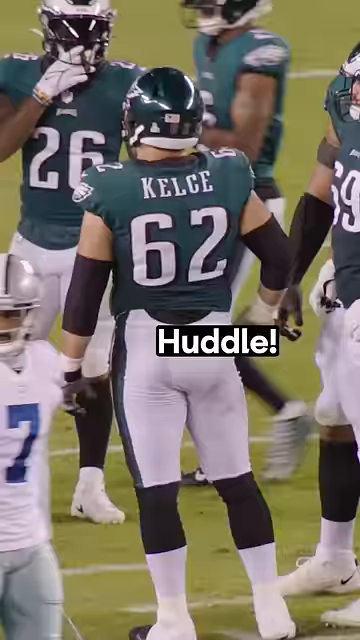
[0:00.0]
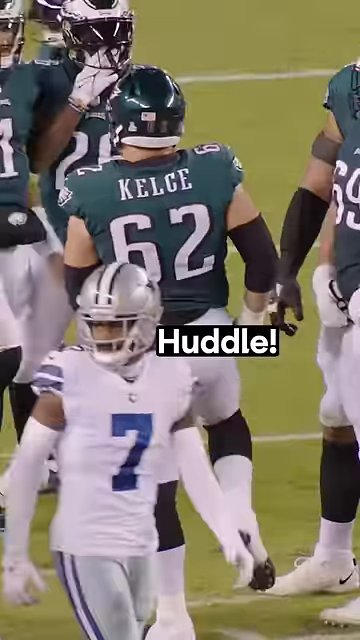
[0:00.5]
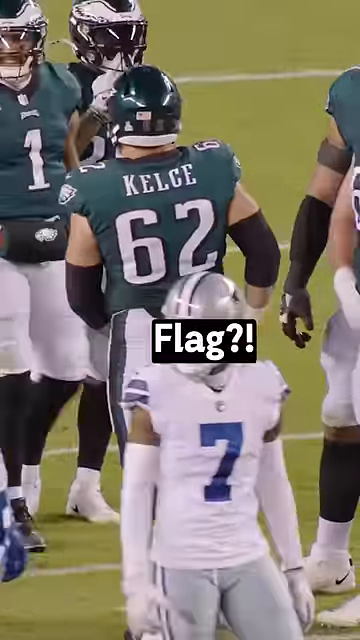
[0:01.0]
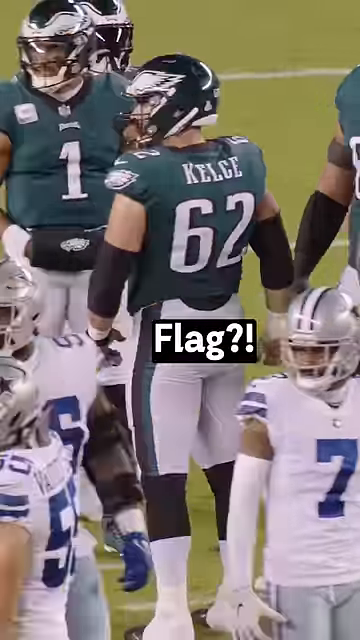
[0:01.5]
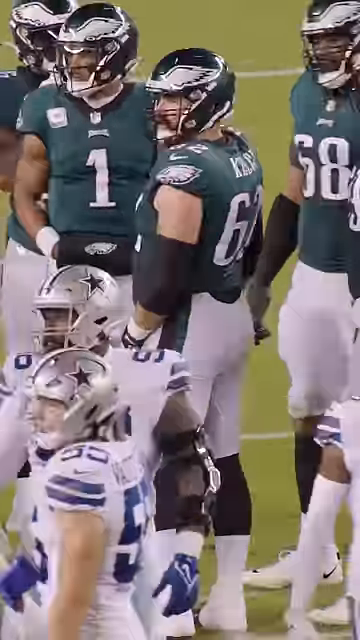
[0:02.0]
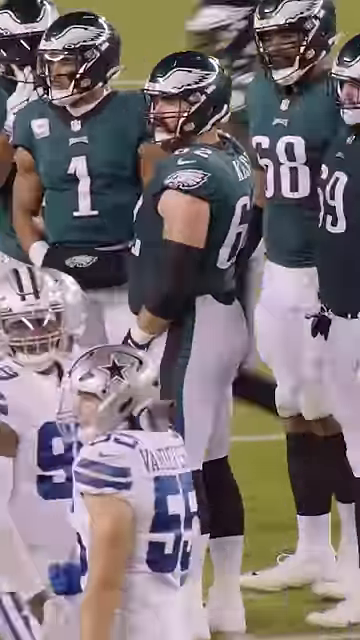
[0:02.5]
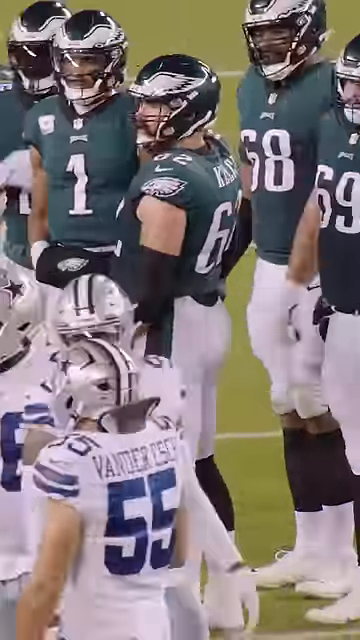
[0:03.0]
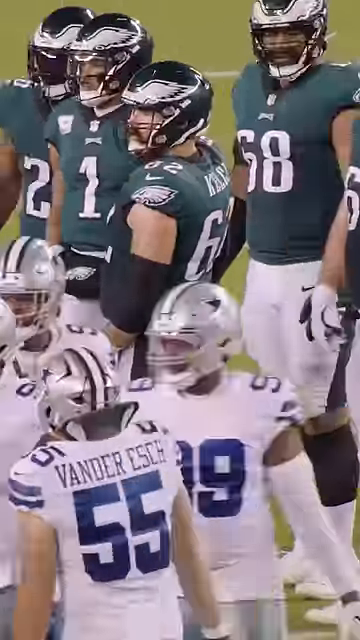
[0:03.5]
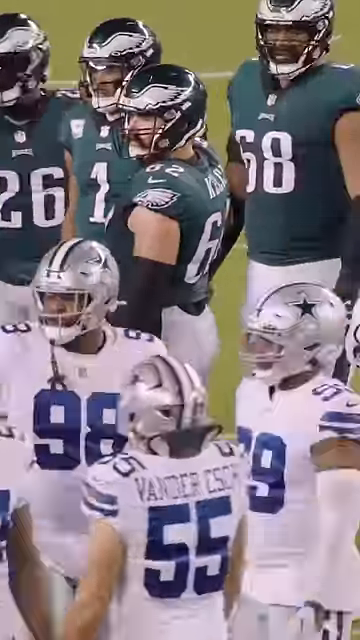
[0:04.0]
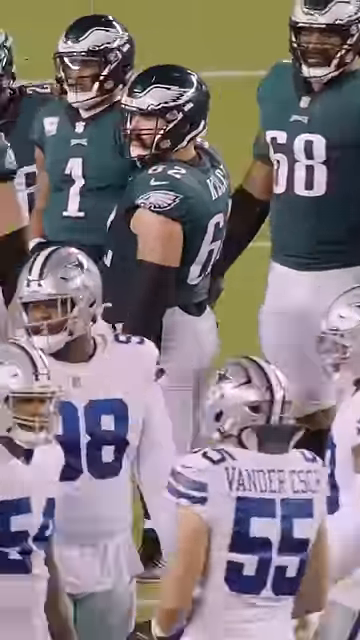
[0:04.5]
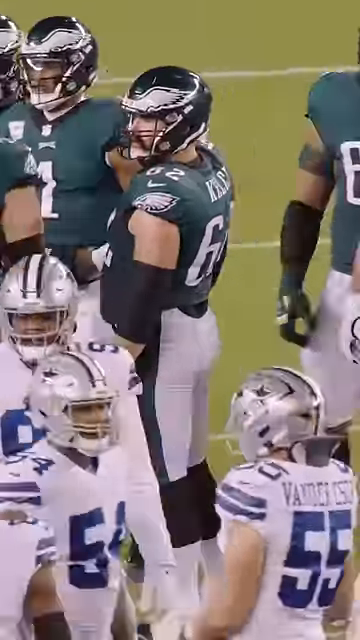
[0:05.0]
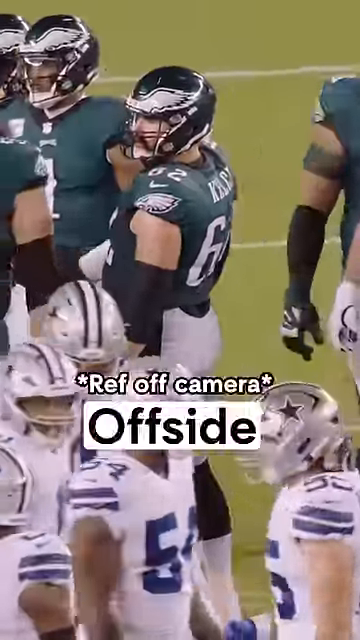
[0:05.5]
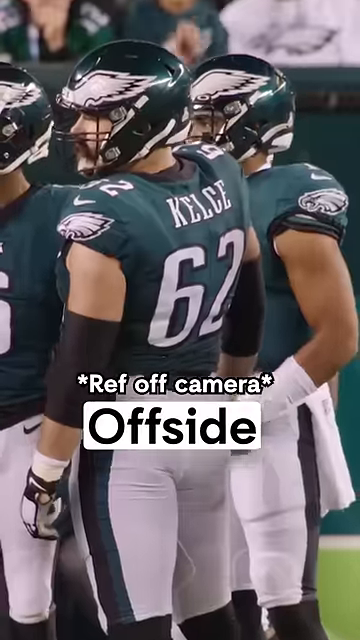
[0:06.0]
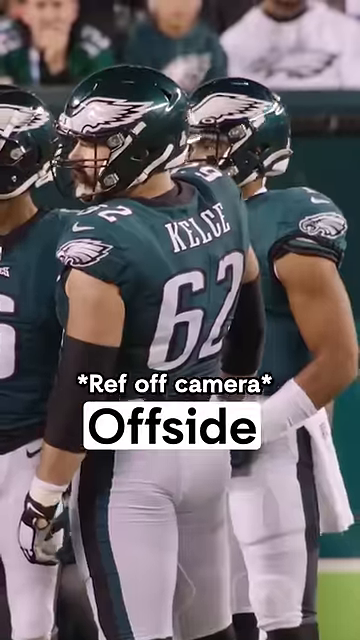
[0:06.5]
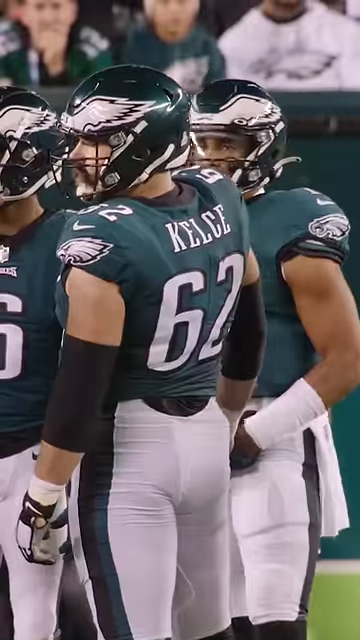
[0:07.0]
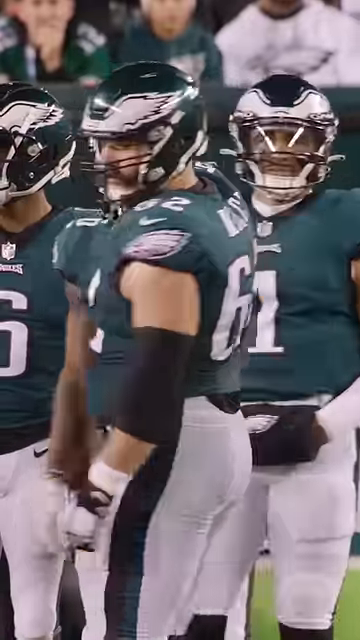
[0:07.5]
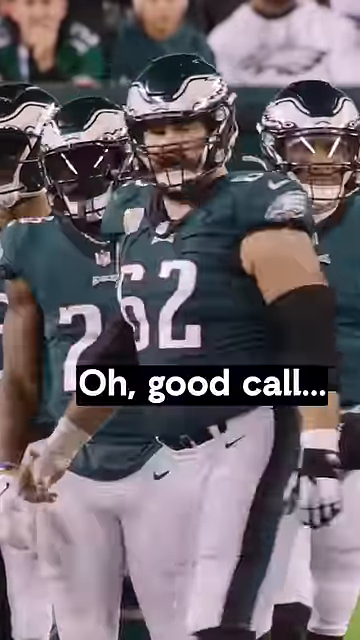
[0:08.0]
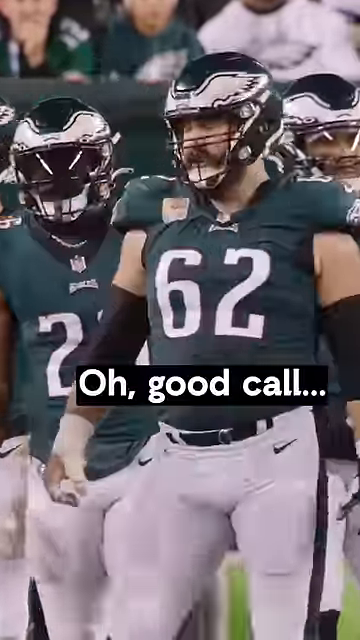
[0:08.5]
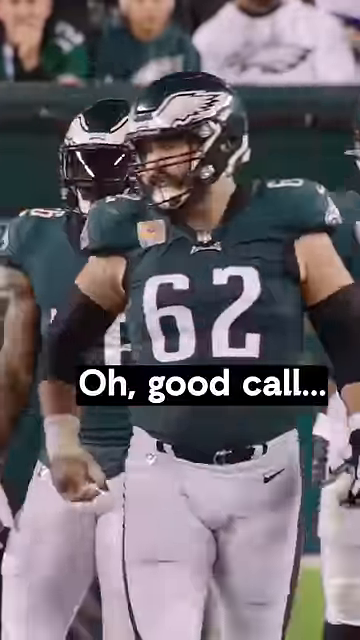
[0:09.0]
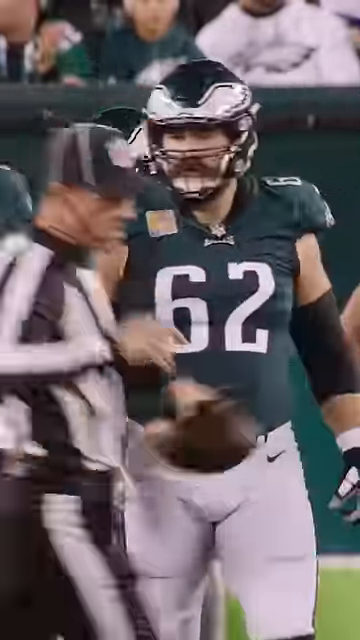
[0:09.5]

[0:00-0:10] Footballers chat and banter with each other, perhaps before the game or between quarters. One team wears green and white, and one athlete appears to be one of the Kelce brothers. The other team wears white. The two teams stand on the ground in their own positions, warming up and chatting with each other. Subtitles on the screen say "good call" along with some other text.